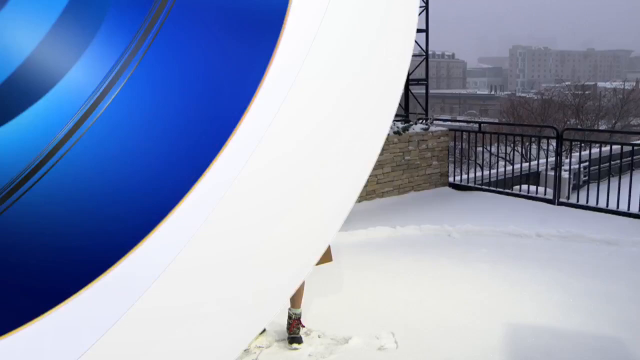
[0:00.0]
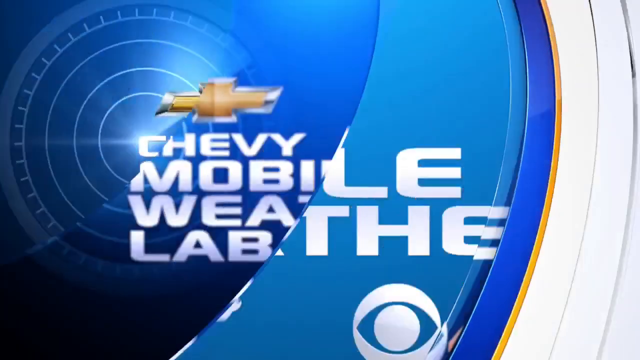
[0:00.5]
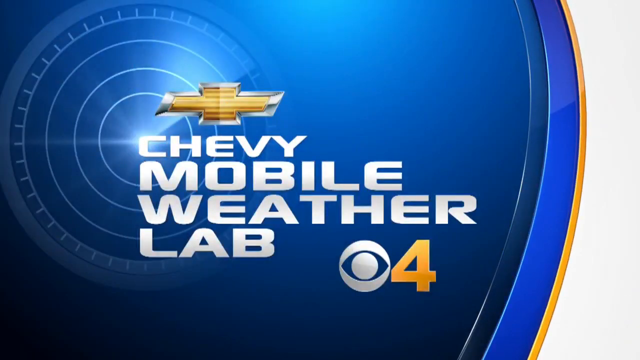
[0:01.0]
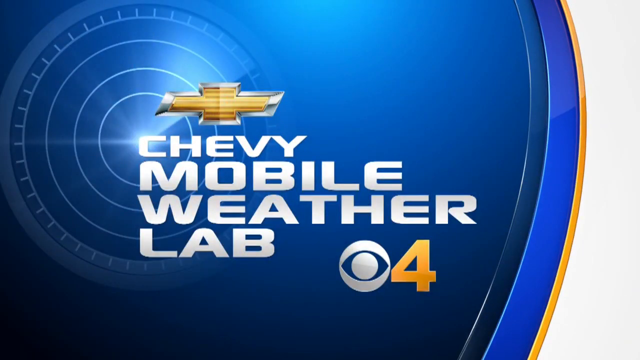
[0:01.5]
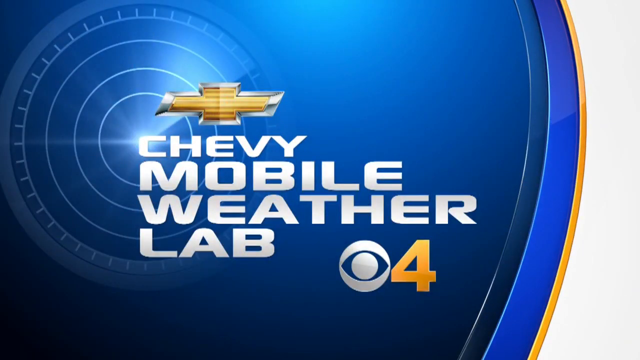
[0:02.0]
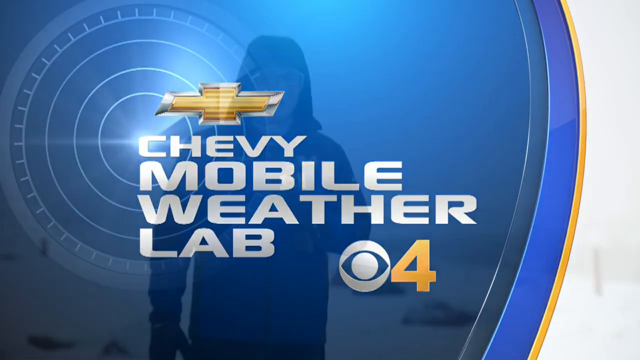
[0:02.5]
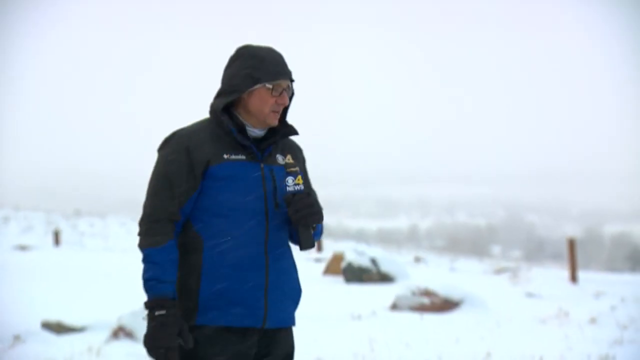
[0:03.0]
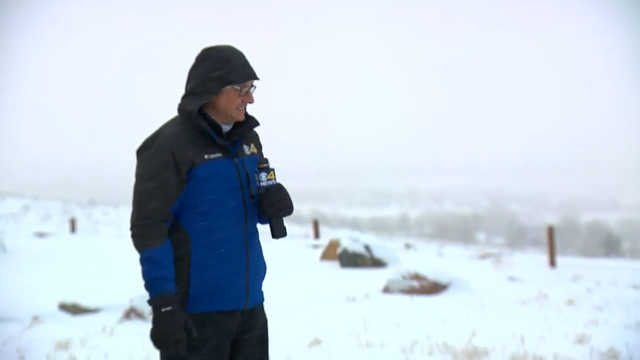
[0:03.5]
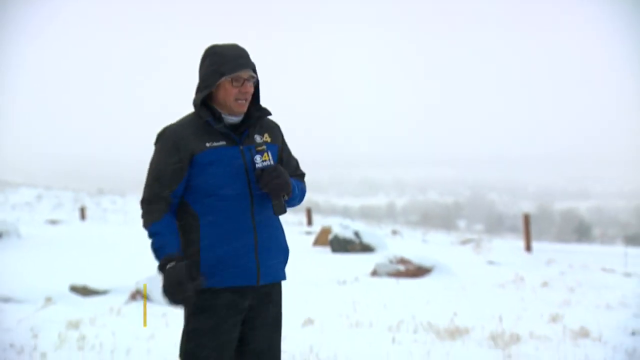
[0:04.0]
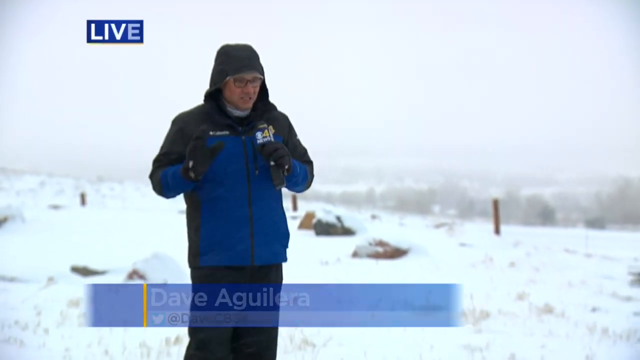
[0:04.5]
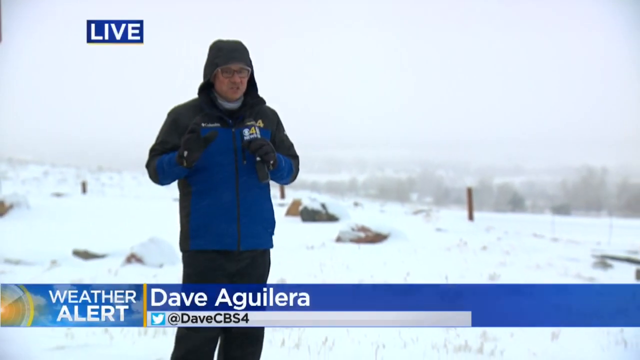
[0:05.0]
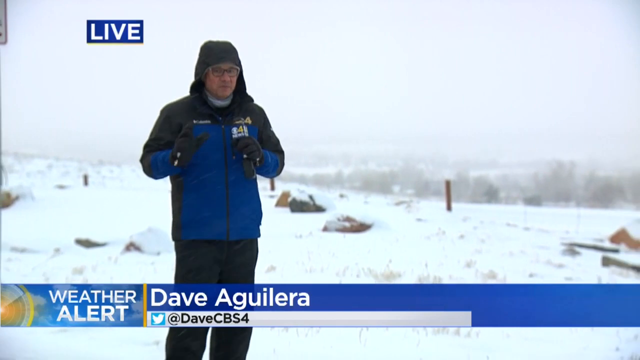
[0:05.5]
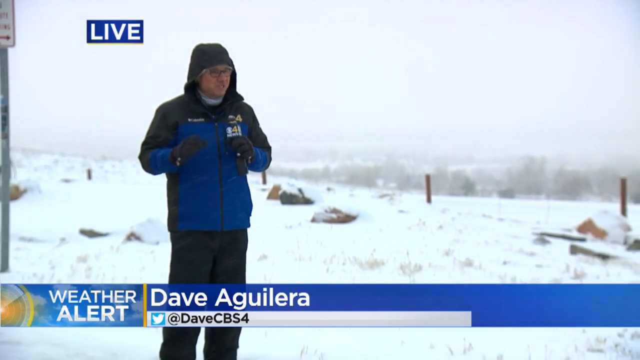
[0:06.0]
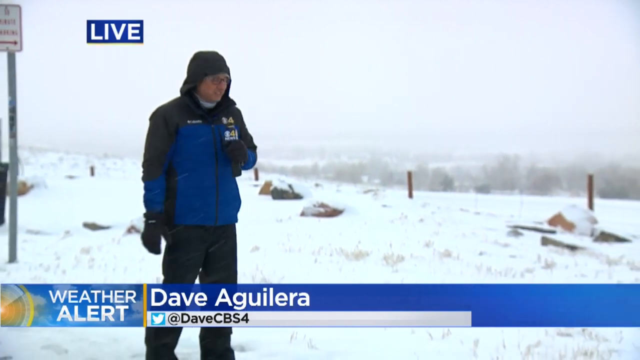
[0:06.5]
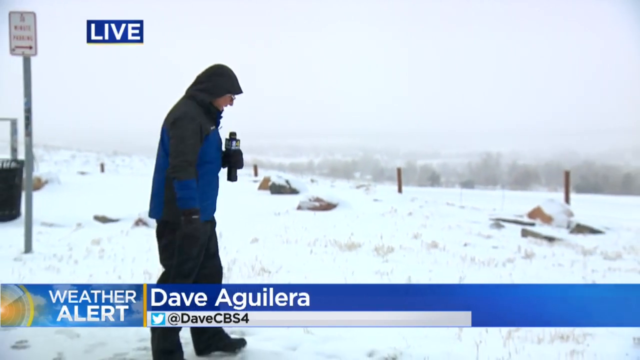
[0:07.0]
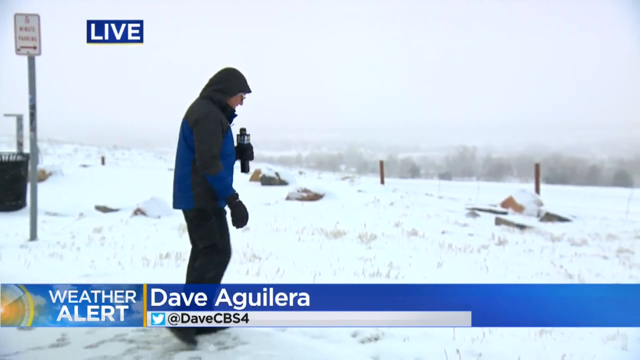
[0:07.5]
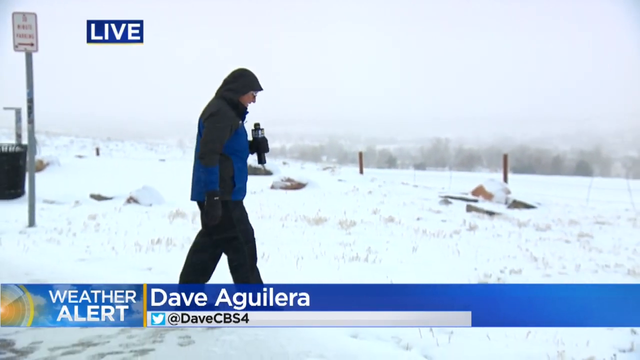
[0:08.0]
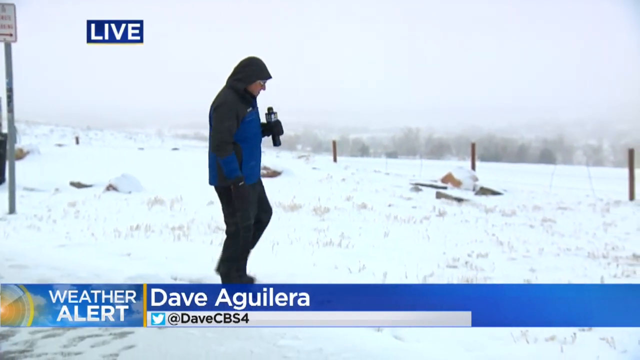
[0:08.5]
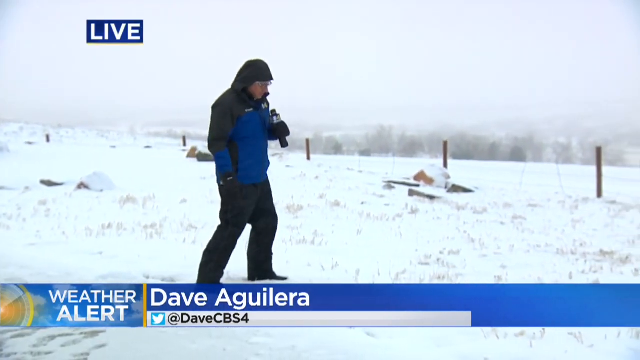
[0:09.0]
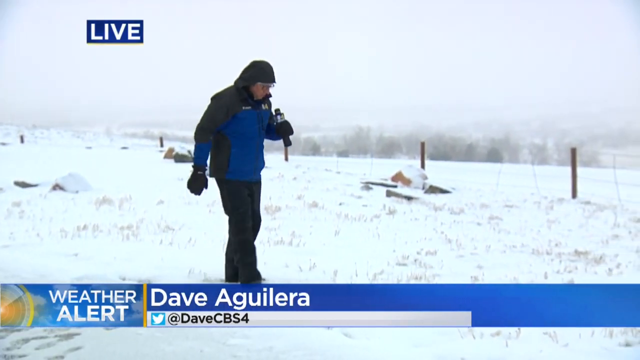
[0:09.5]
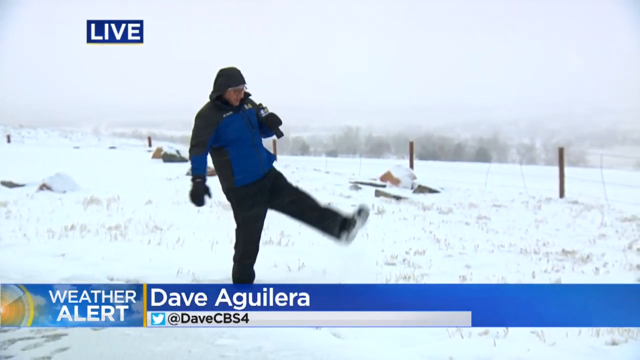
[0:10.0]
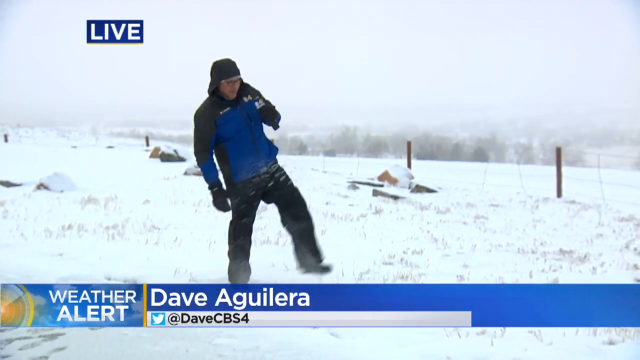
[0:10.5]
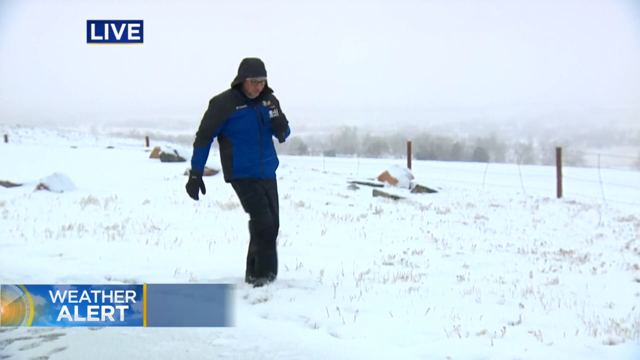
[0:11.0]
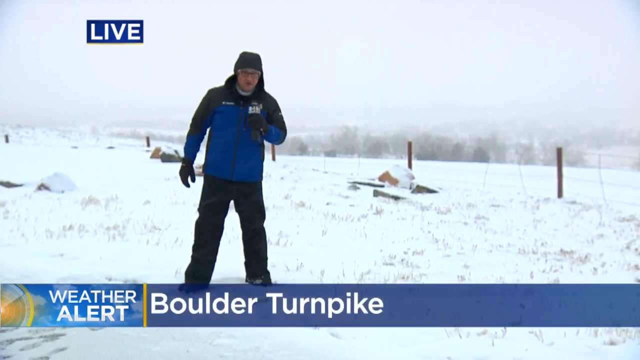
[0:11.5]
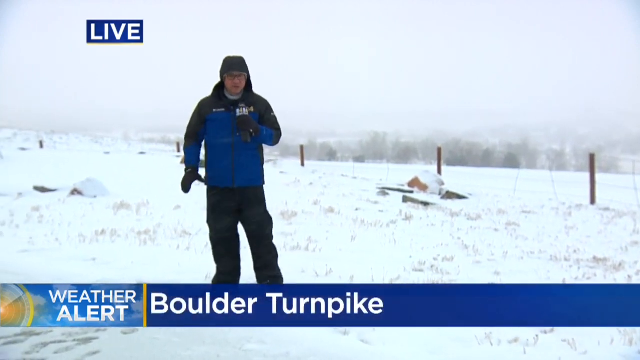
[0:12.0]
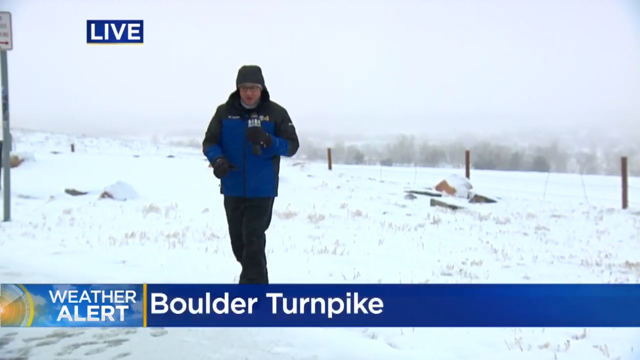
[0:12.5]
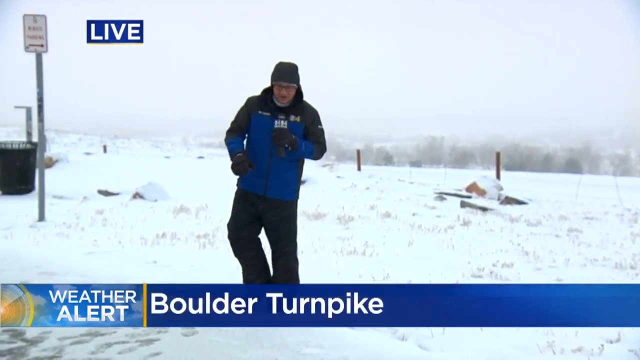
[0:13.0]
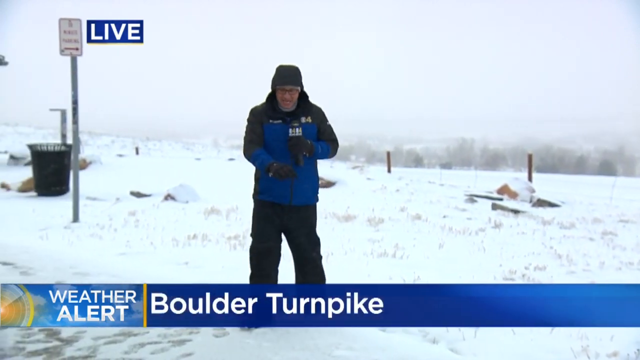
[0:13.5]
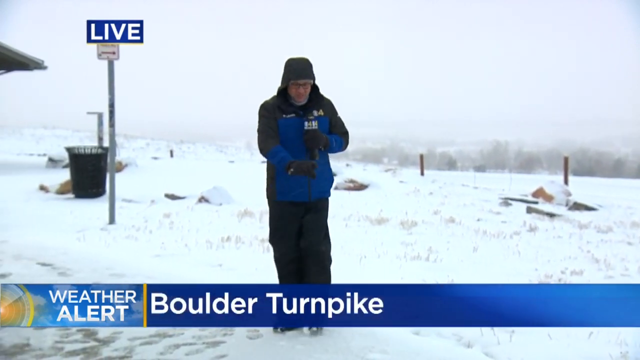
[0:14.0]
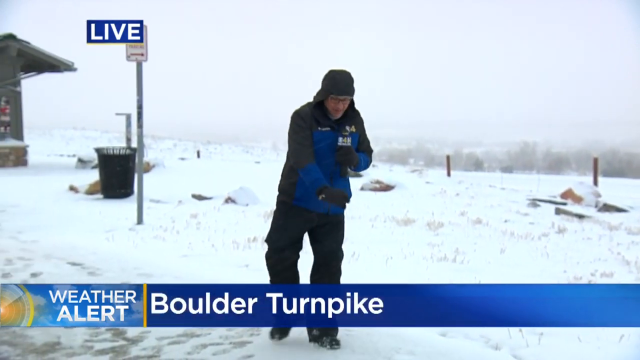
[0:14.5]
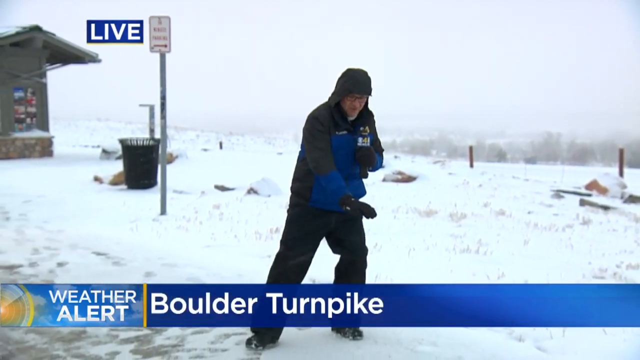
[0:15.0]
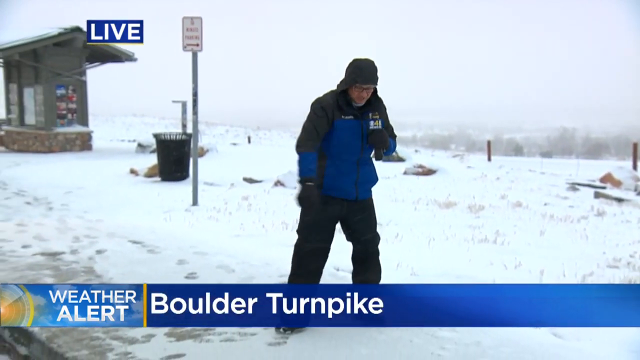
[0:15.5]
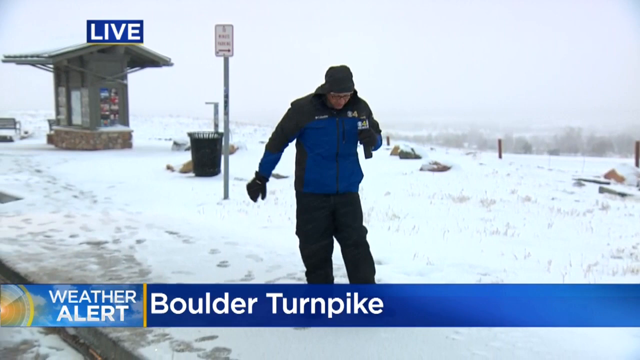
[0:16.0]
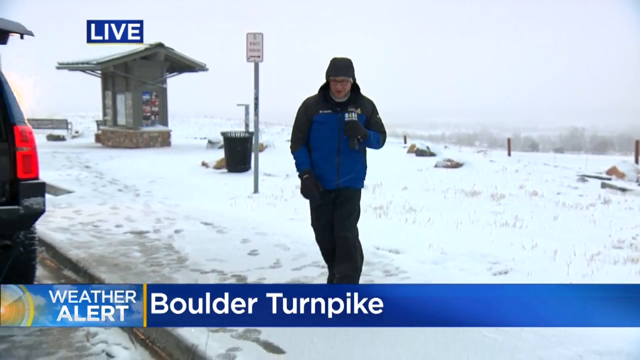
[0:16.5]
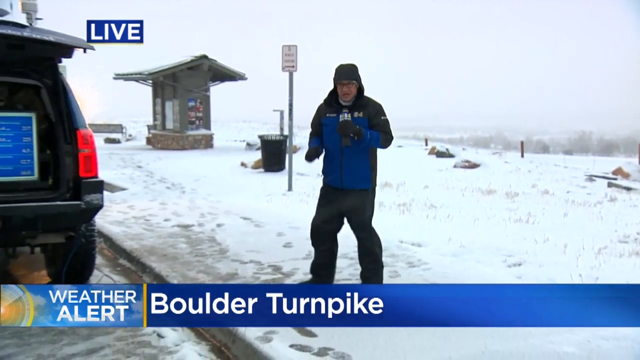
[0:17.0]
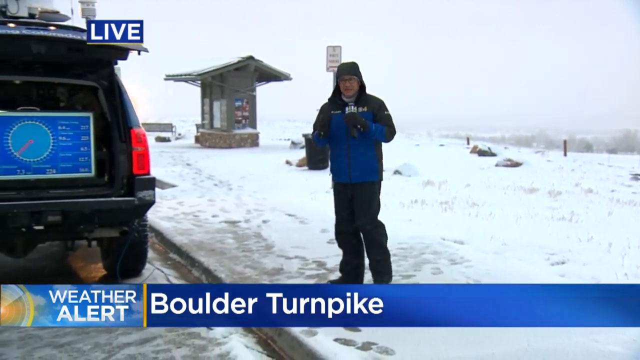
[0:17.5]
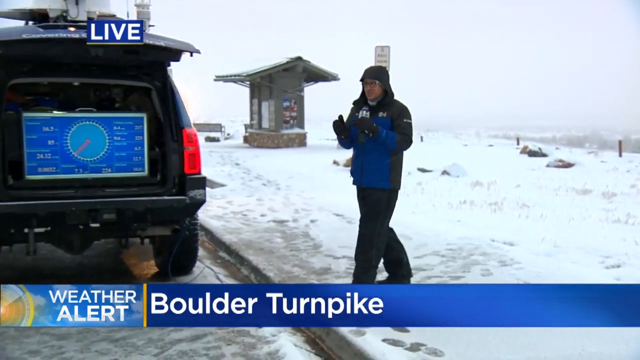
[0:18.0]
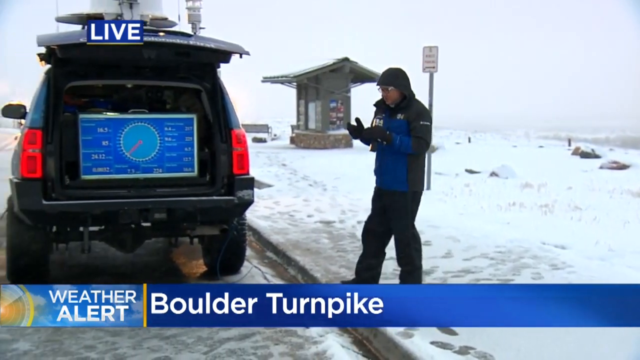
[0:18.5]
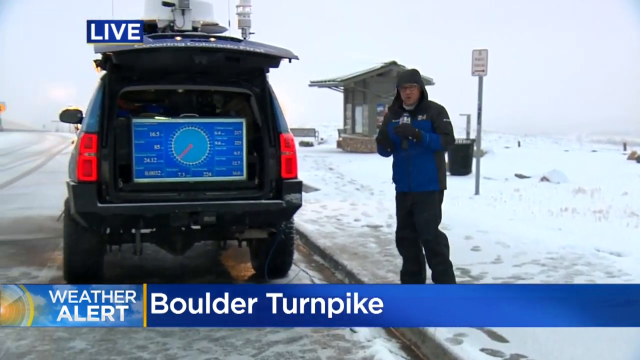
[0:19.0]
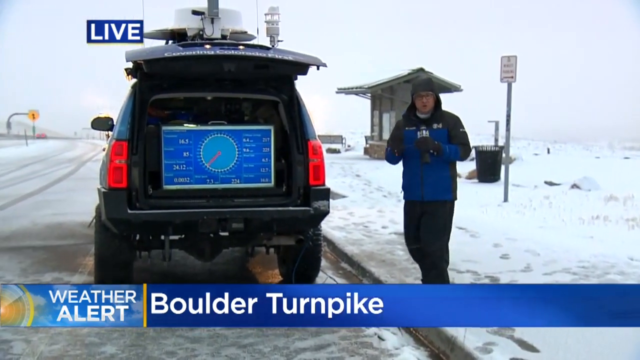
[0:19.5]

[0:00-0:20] The video opens on a news station weather segment, with a Chevy mobile weather lab bearing the CBS logo and the number four. Text on screen reads "weather alert", and "live" appears up top. A man is out in the snow, wearing a blue jacket with some black in it and black pants. There is a monitor displaying other weather information in the back of the car; the trunk is wide open and he stands up in the trunk. He gives the weather report out in the snow, talking into what looks like a microphone with the CBS logo and the number four on it. It is a live broadcast of current weather conditions, and it is snowing there.